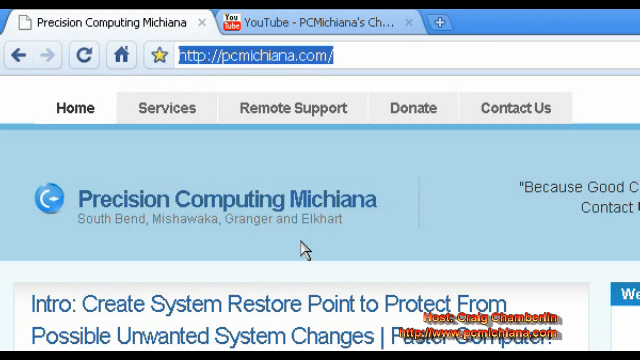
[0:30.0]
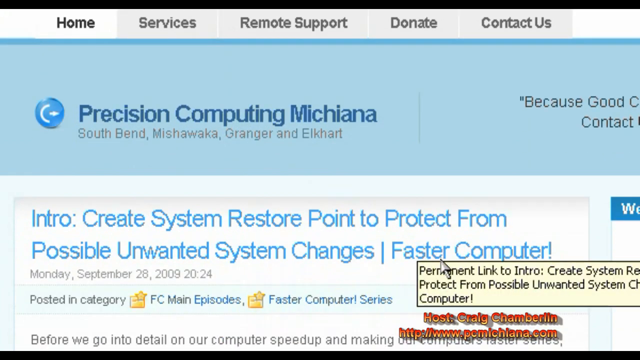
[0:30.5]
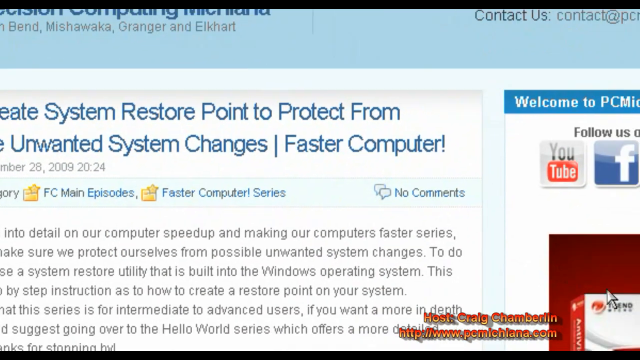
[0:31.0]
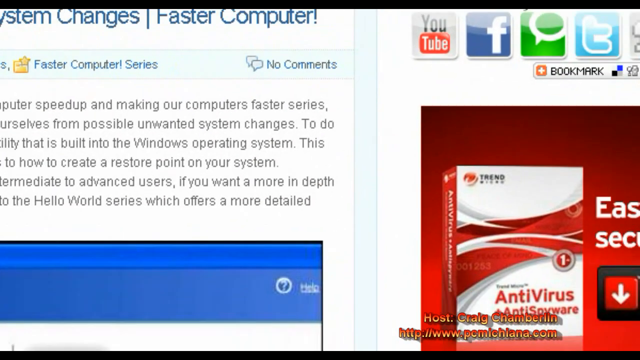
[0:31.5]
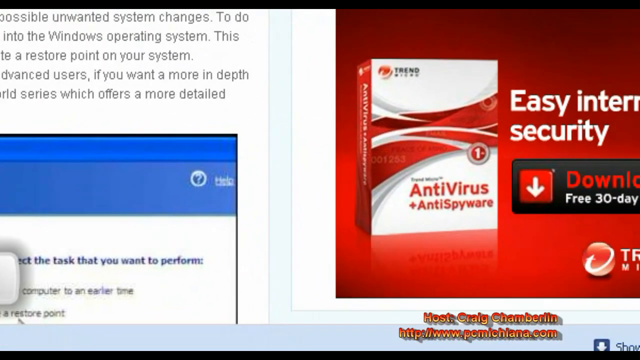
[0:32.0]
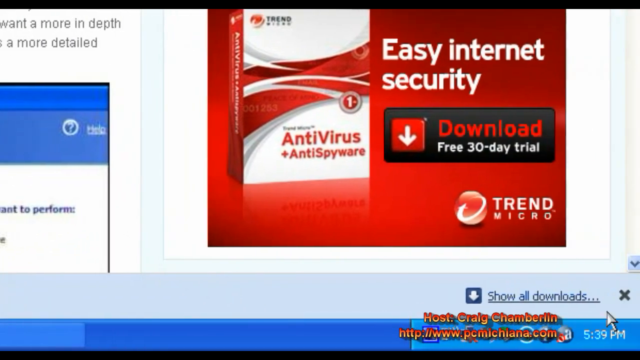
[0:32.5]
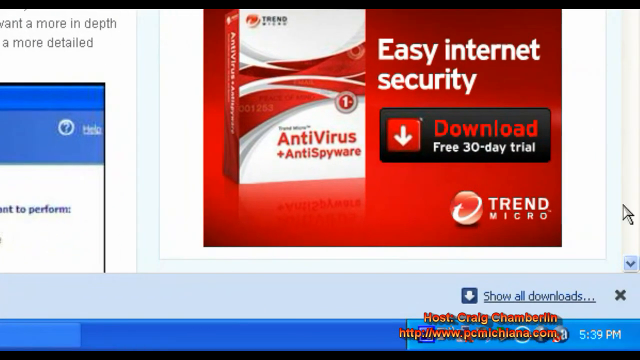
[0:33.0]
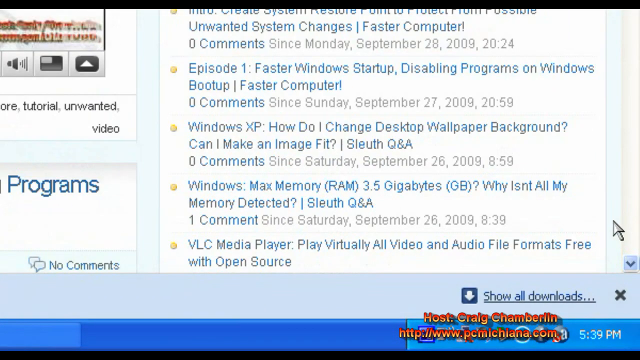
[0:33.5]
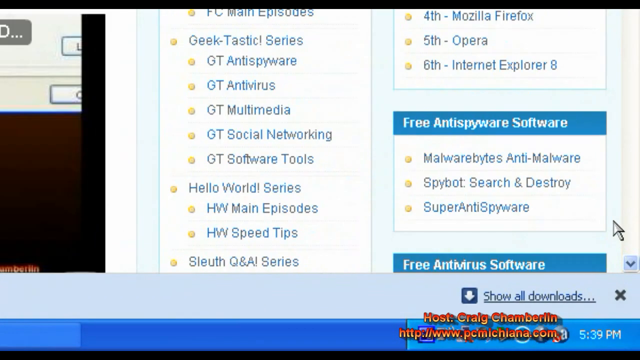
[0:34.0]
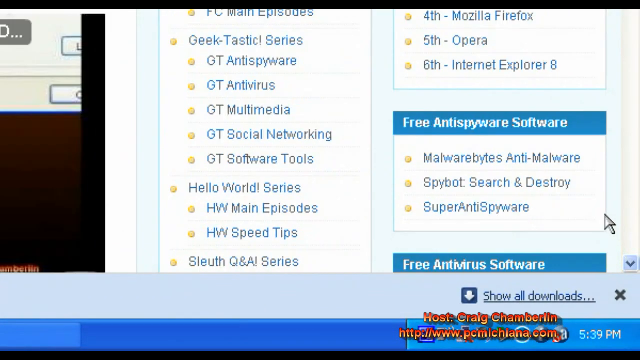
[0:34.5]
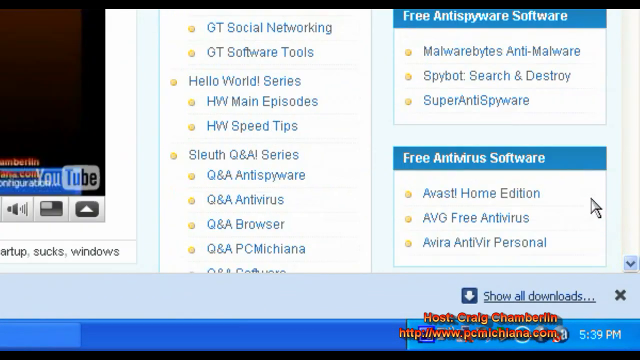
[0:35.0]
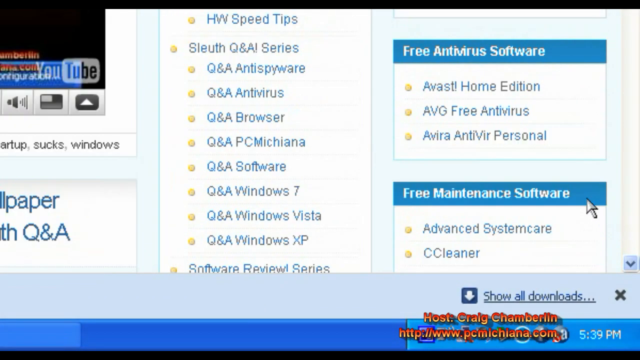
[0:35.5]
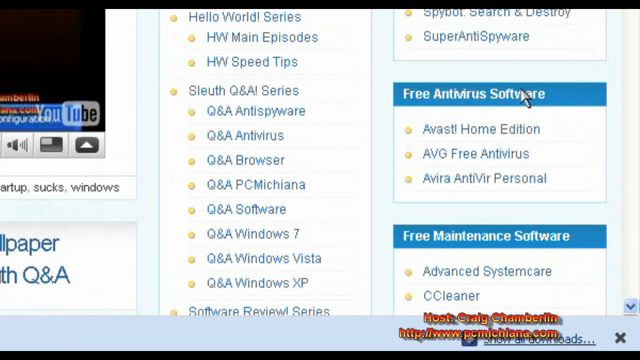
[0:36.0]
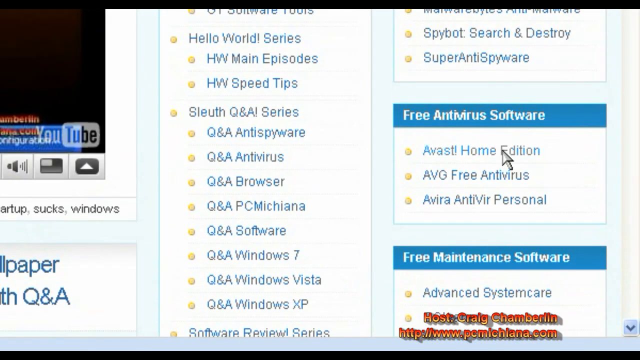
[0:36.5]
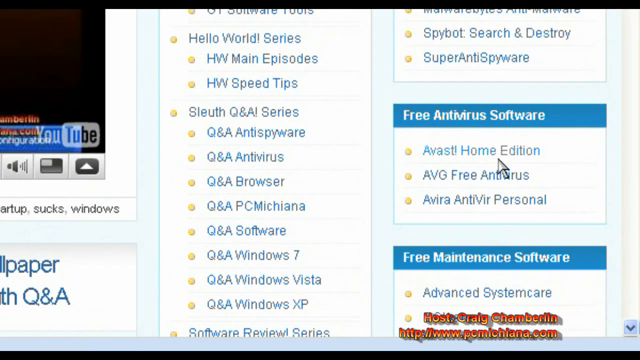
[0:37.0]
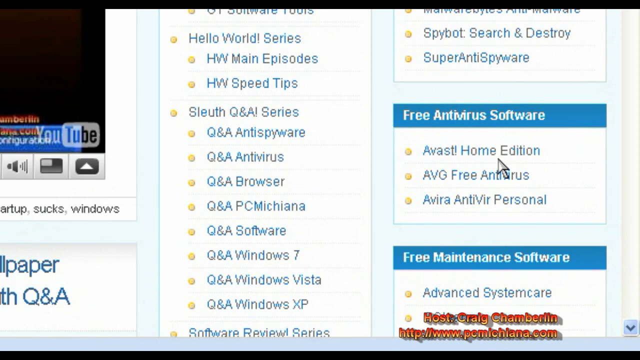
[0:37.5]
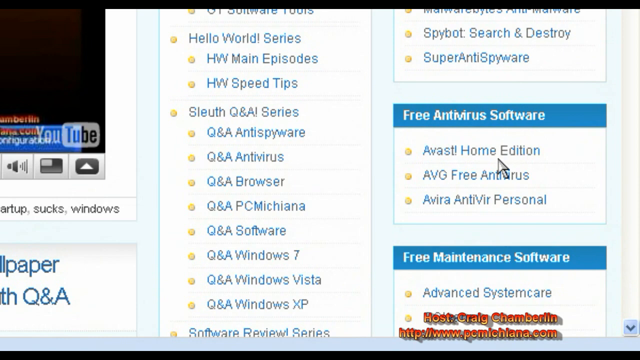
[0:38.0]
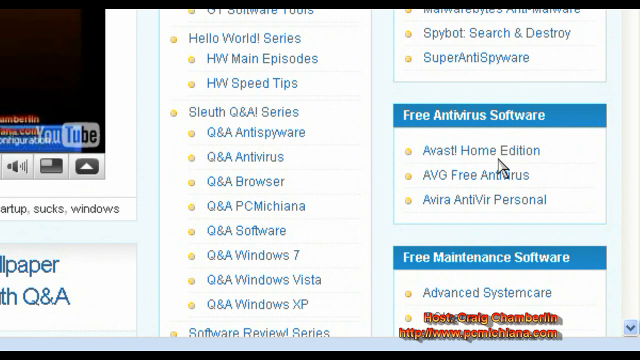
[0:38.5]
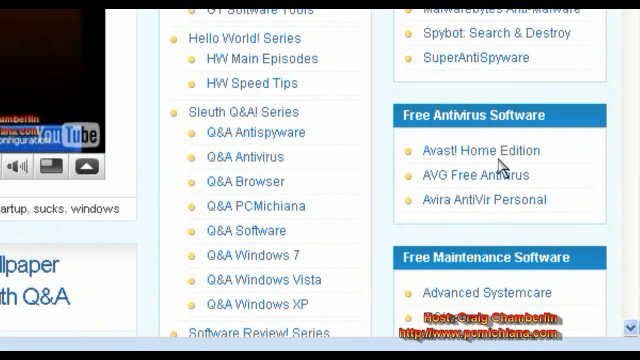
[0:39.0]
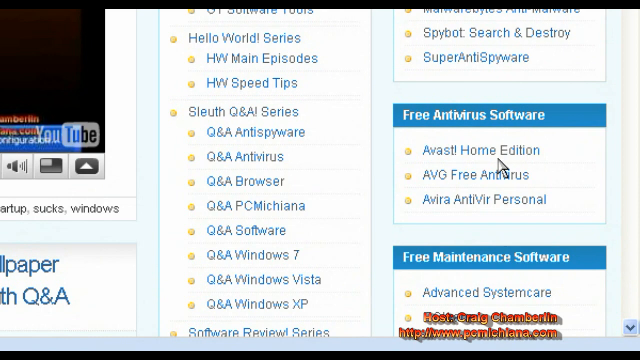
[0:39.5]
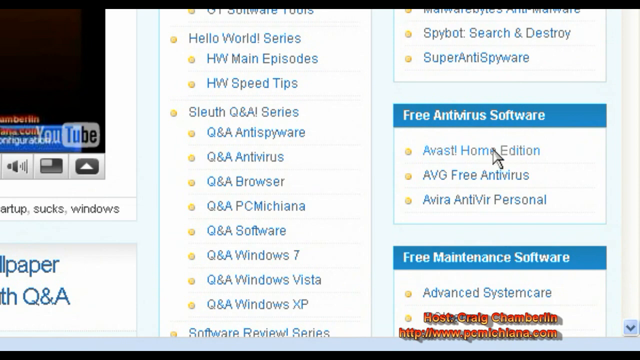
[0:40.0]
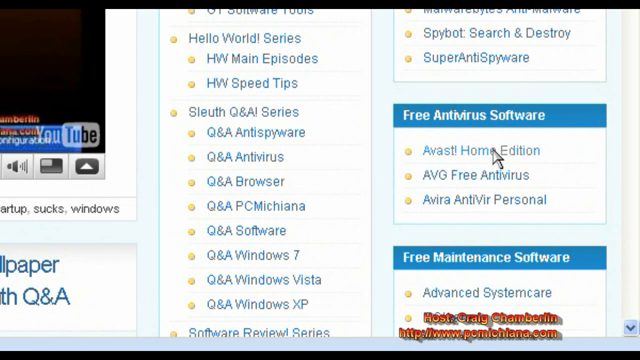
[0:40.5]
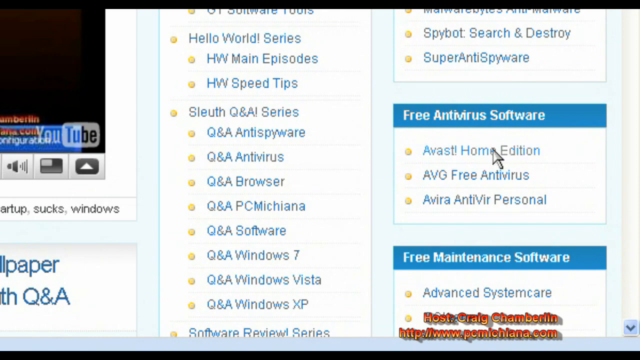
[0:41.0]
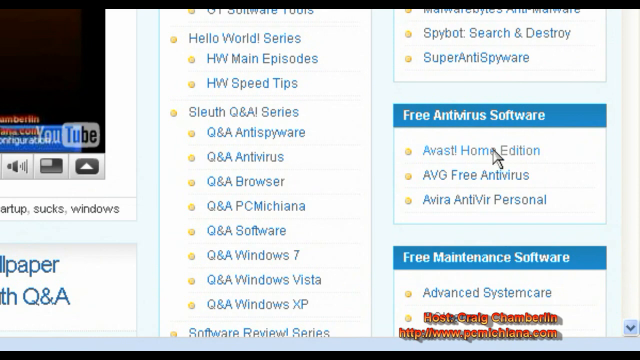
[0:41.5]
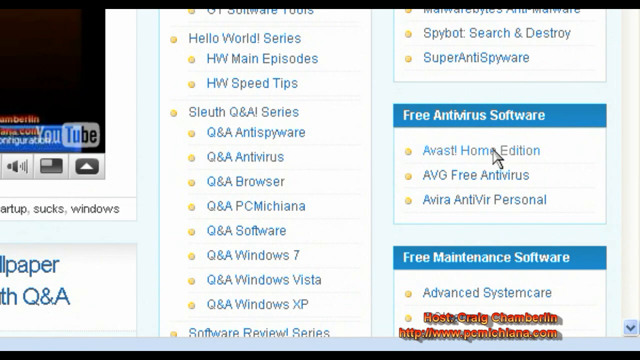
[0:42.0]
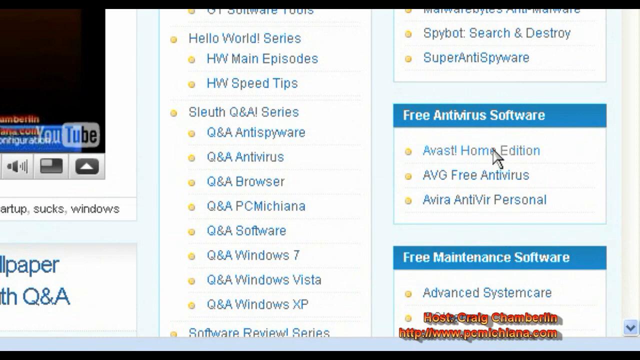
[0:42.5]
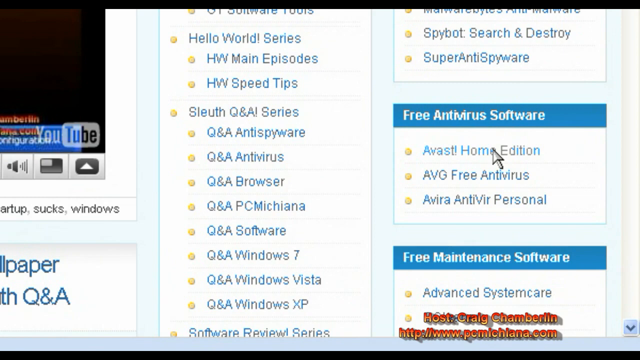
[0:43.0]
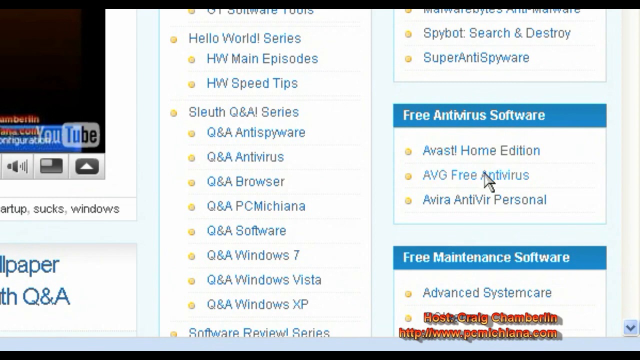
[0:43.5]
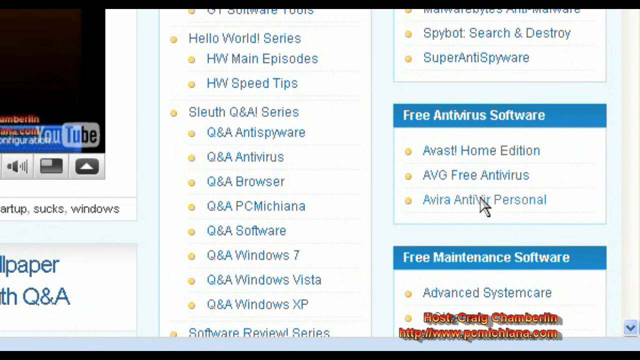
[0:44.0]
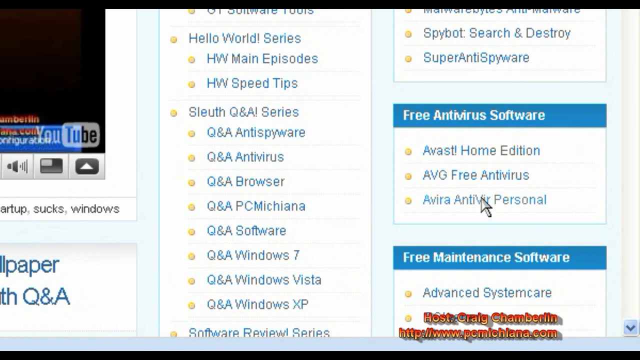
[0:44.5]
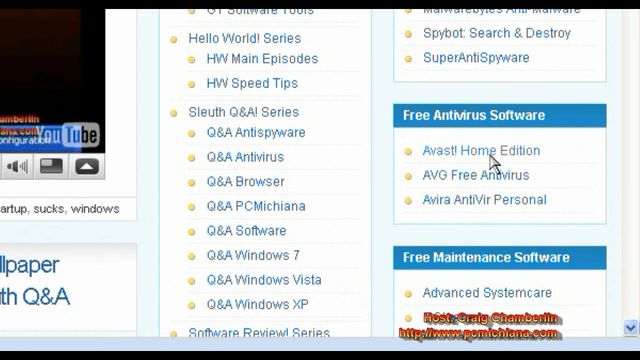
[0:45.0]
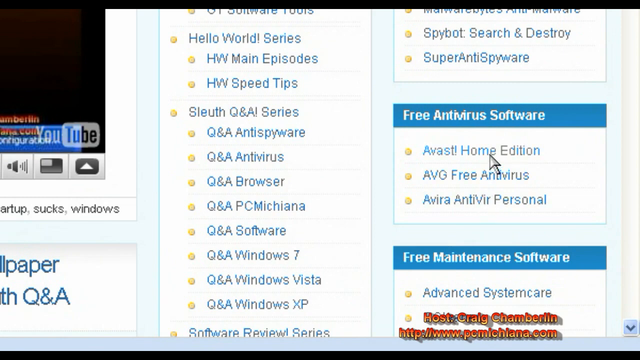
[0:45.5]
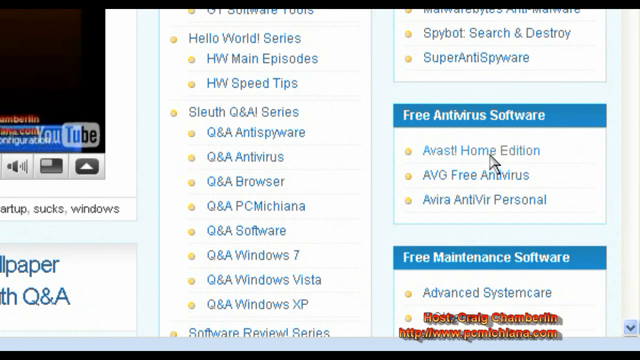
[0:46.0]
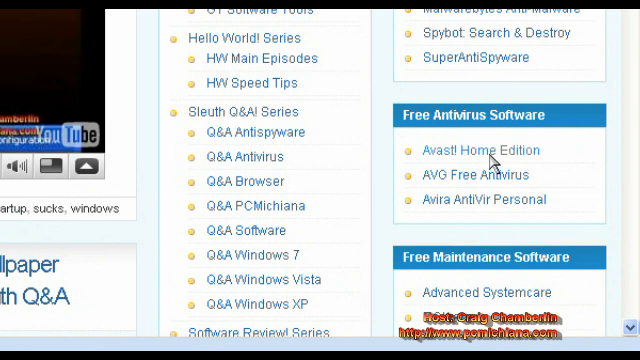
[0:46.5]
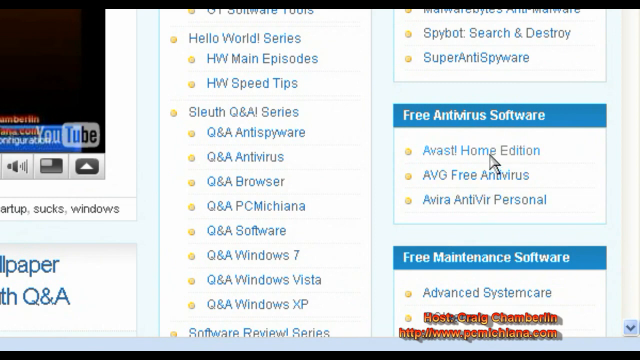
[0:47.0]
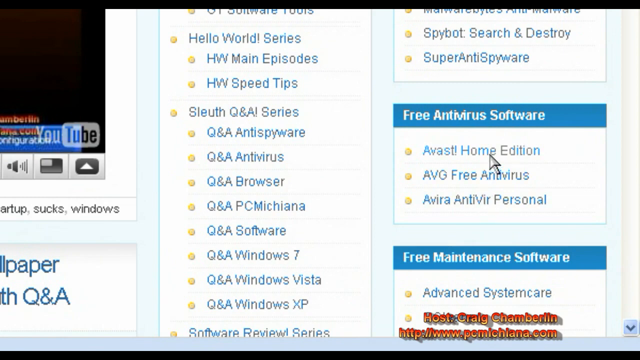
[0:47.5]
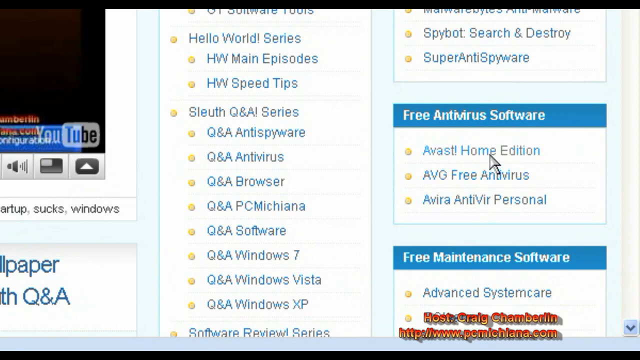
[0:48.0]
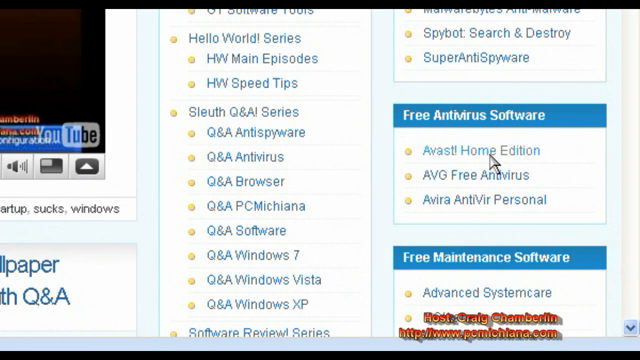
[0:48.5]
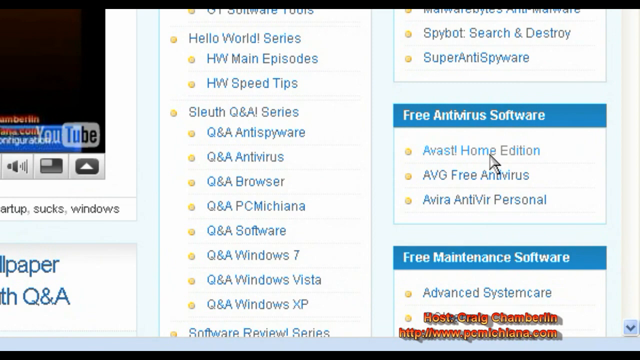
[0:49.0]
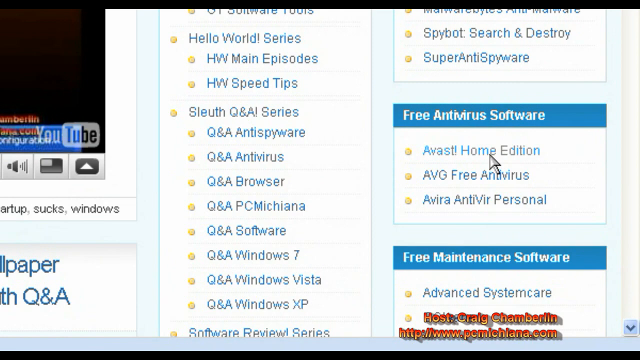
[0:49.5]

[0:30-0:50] The view scrolls around the page to the end, showing various lists of free antivirus software. Scrolling further down, it reaches an Avast Home Edition entry and appears to click on it, or at least hover over it, turning the blue writing a lighter blue. As the page scrolls down, logos for Facebook, YouTube and similar sites are visible, along with lists in boxes throughout the website: Hello World series, main episodes, speed tips, antivirus, Q&As and browser Q&As, almost like an archive of help points. The page is laid out in boxes and includes advertising for antiviral software, though it is unclear whether that is part of the page or a separate advert. Off to the side is a link to a YouTube video, with the YouTube logo in the corner. The background is a pale blue with the boxes on it, and the view scrolls down and then to the right. Each box has a dark blue stripe at the top with the title in white writing, and a white box underneath with a list of options, including Avast Home Edition, ABG Free Antivirus and Avera Antivirus Personal.